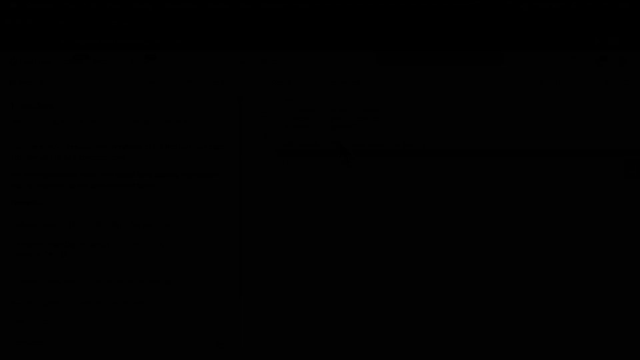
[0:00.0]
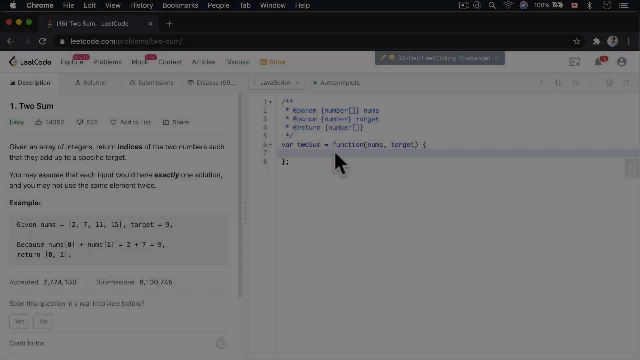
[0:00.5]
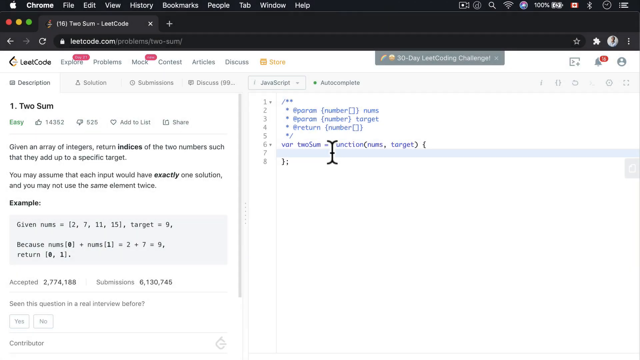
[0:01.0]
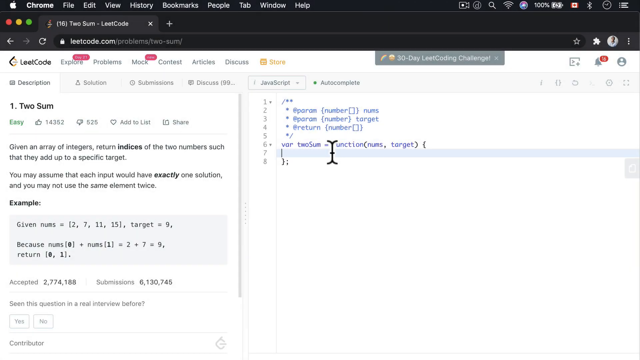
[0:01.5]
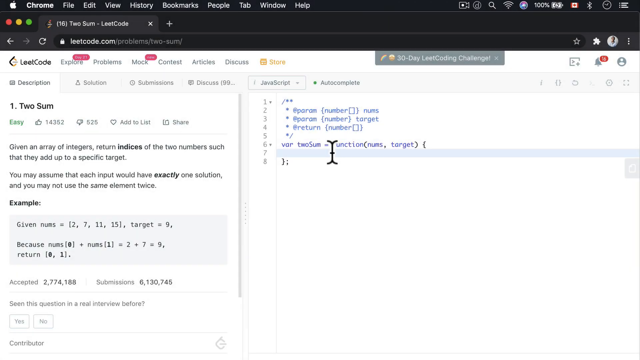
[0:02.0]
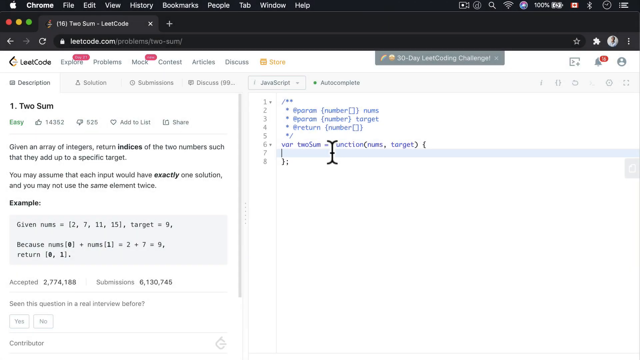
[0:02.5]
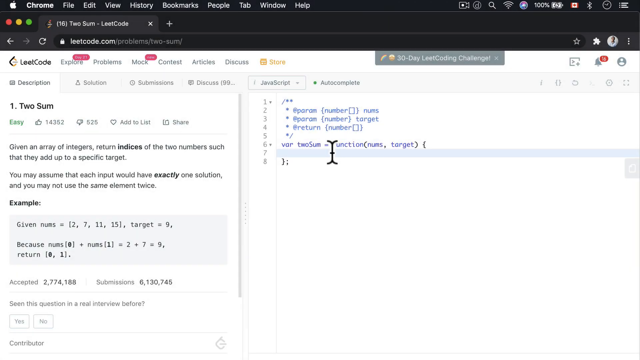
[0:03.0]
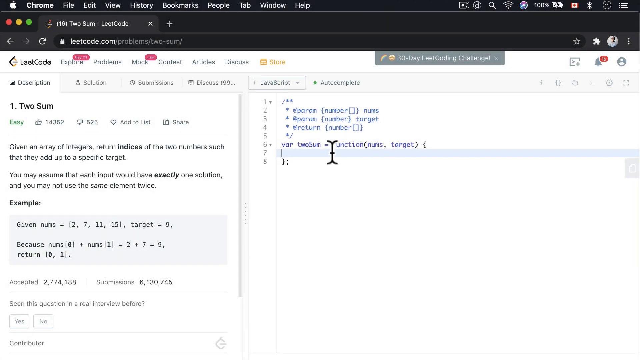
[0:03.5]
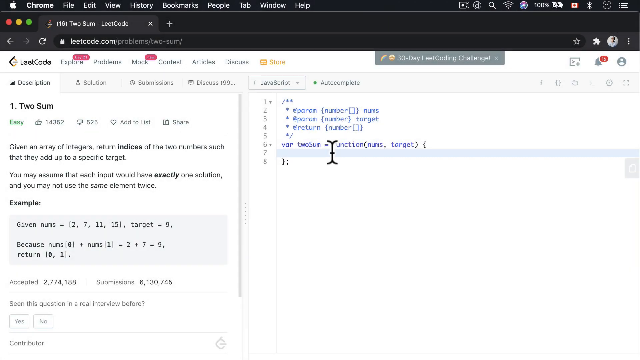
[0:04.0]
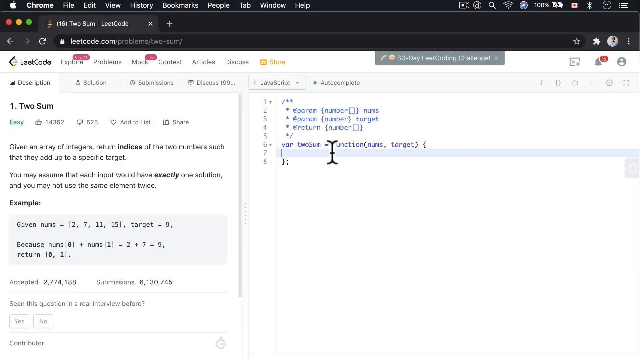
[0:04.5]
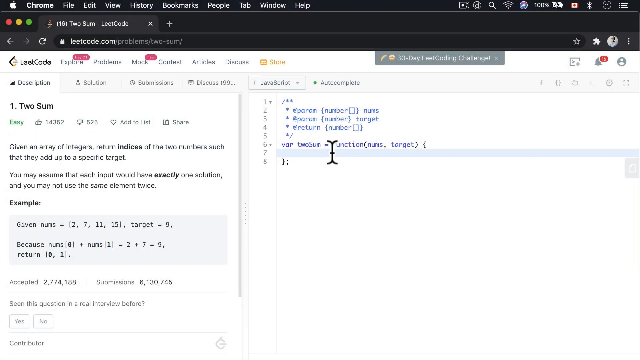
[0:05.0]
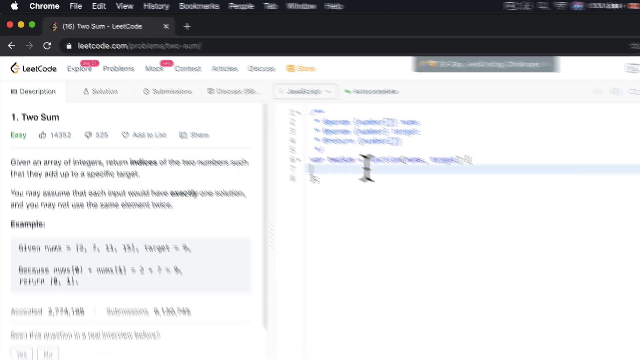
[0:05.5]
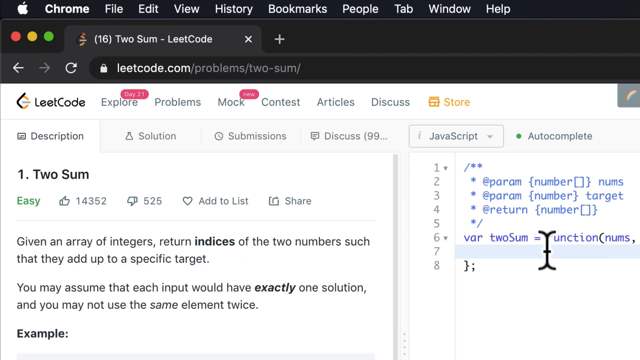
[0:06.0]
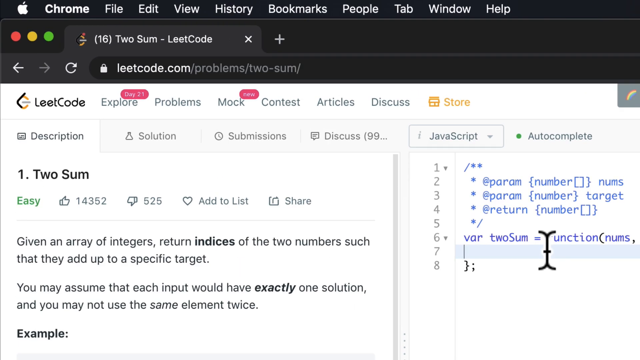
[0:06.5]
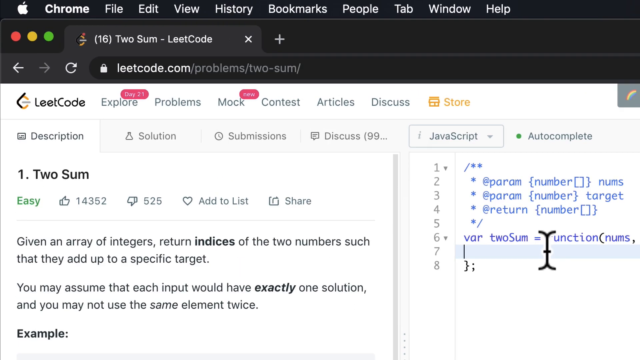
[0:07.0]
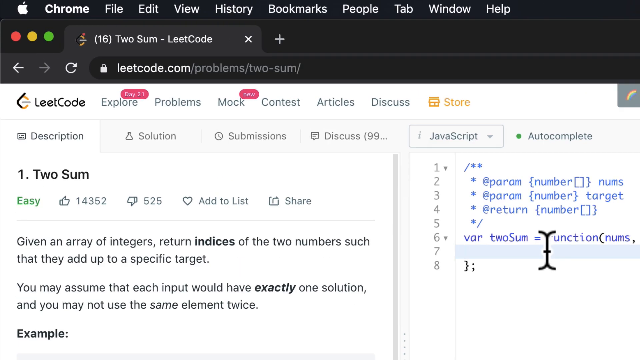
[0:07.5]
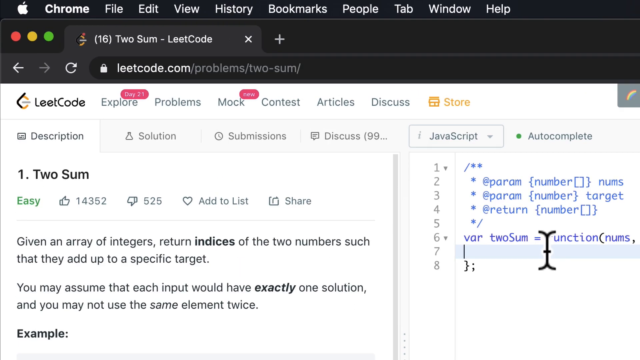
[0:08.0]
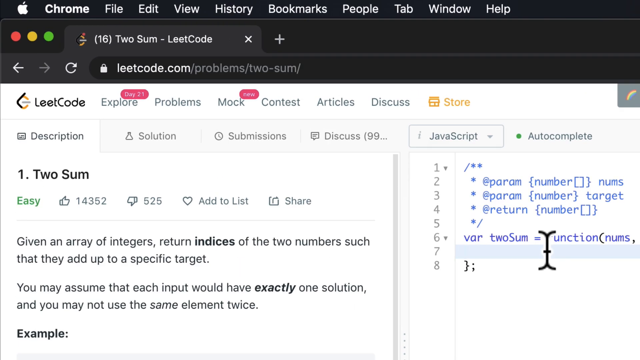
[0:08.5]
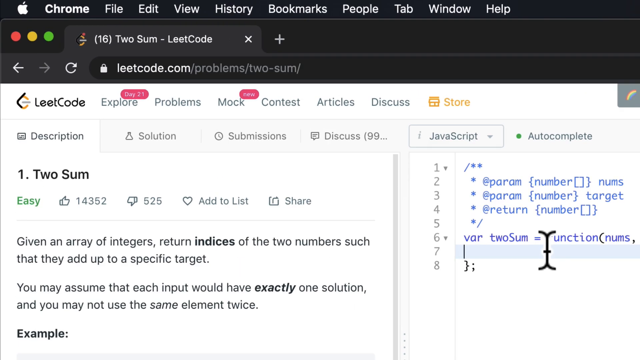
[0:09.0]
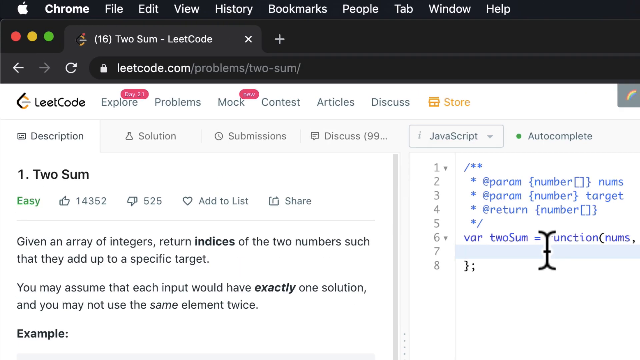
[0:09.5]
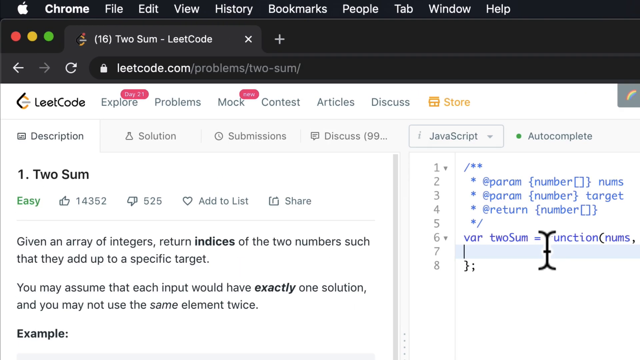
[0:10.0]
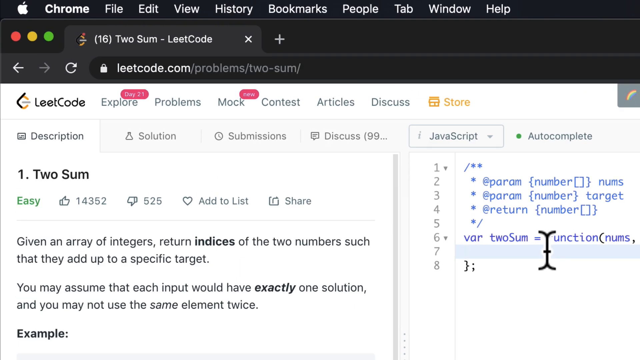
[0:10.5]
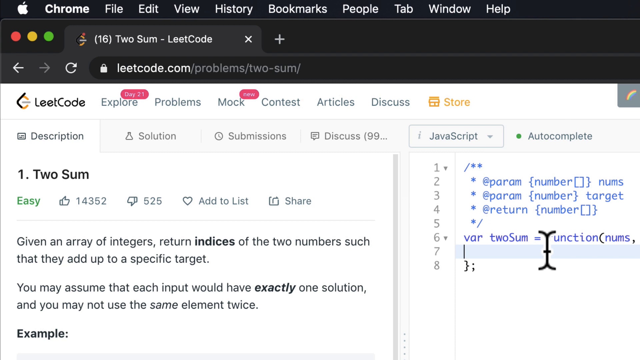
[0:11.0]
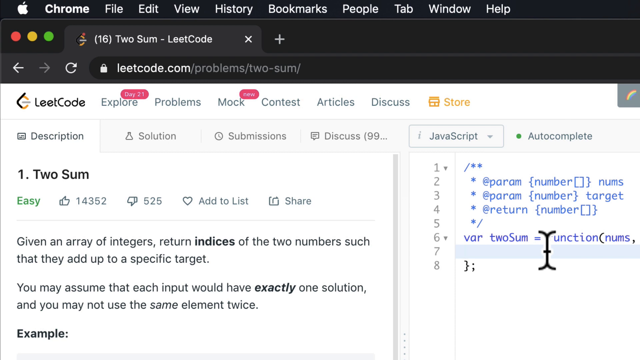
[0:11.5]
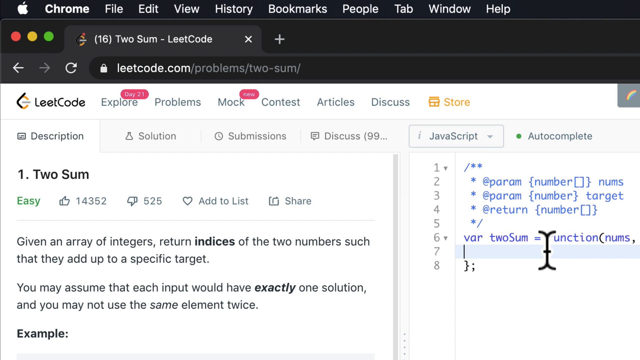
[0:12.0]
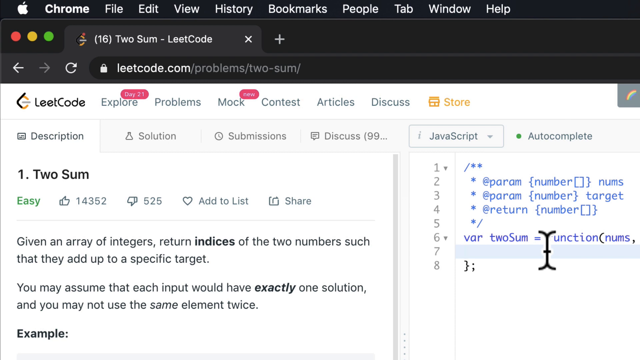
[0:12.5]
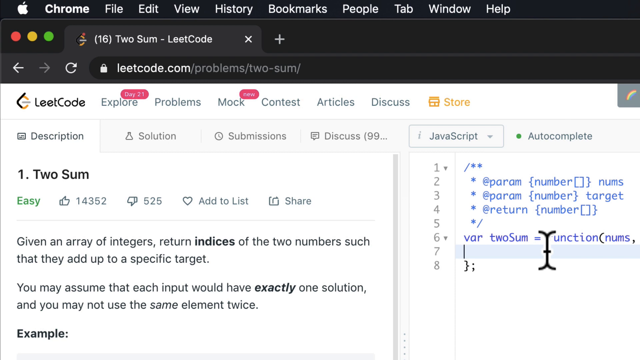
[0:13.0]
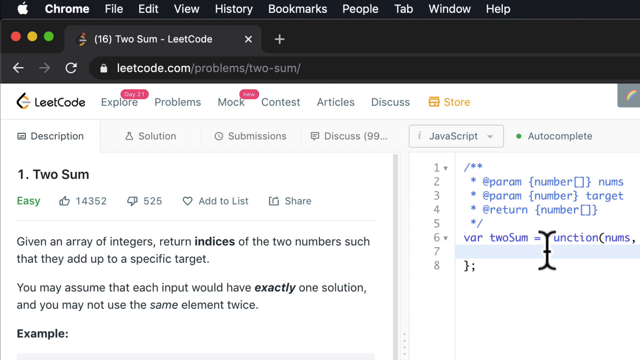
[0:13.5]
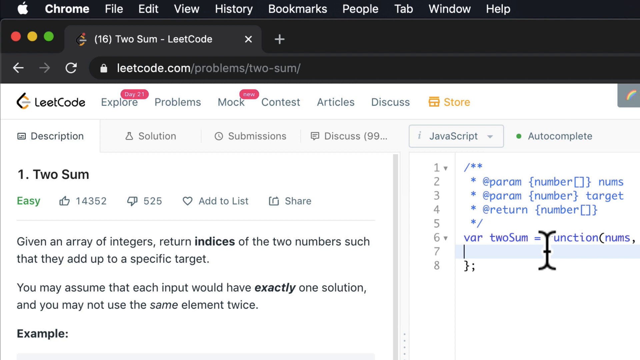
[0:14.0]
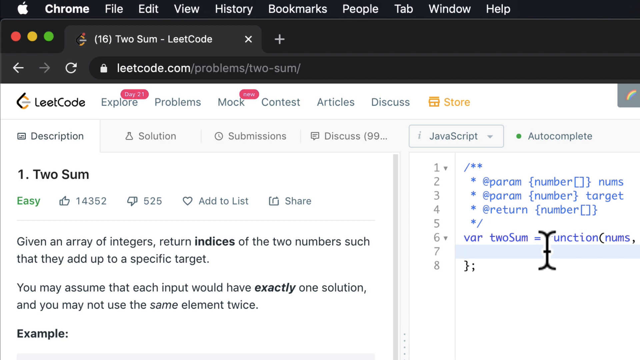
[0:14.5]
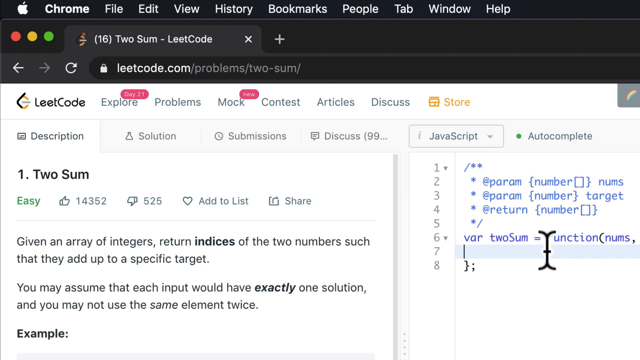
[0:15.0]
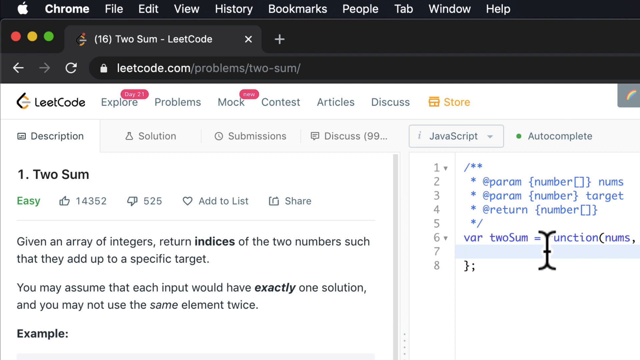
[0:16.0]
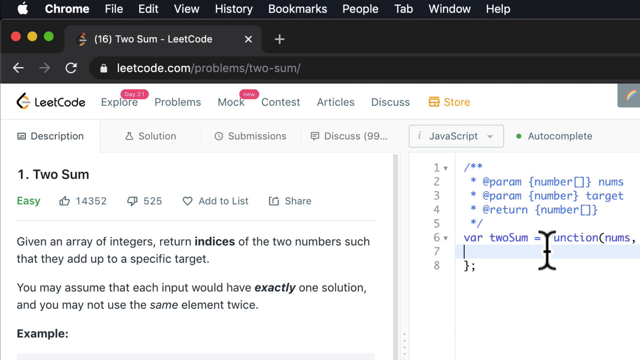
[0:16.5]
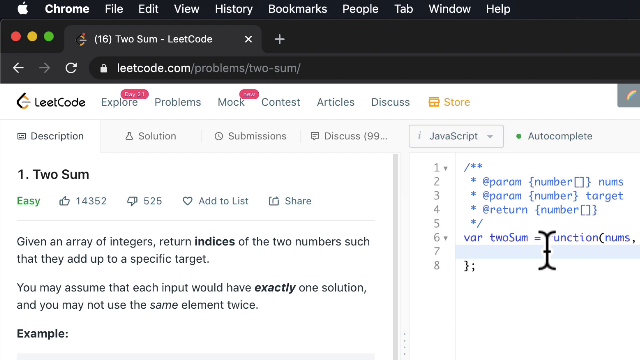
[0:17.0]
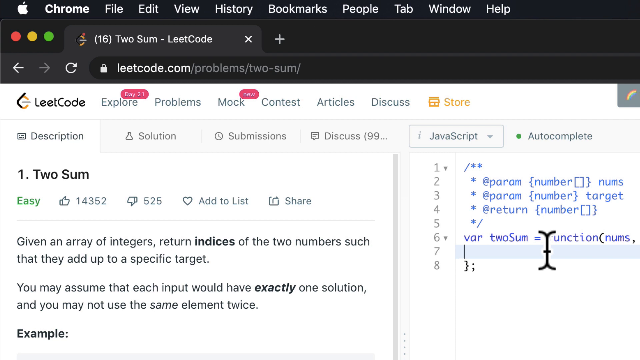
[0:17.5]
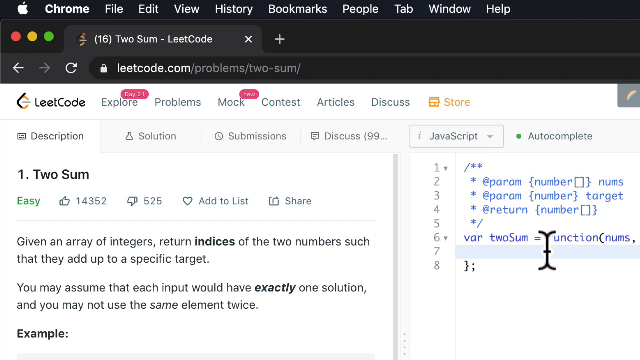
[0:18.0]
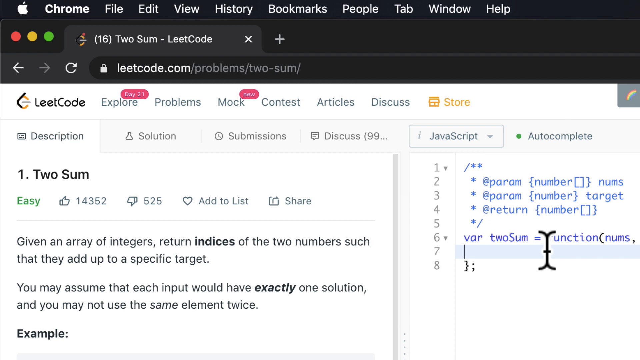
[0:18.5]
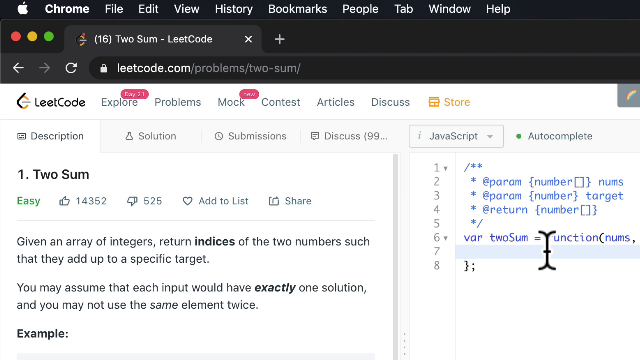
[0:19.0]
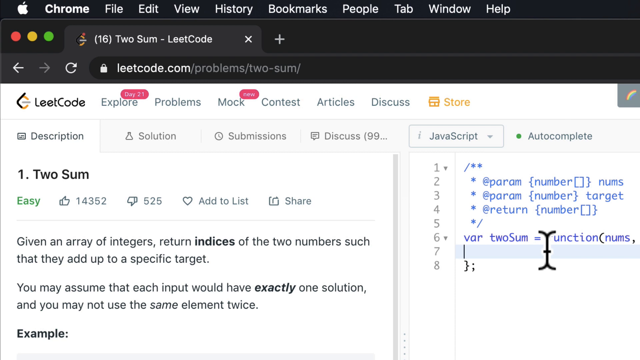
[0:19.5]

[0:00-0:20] Someone appears to be on a coding page, apparently called Leet Code. The view starts wide, showing the code. On the side there is text about something like summing. The view zooms in on the top left of the screen, where it says "two sum leet code". Along the top are categories reading "explore", "problems", "mock", "contest", "articles", "discuss" and "store". Underneath are items such as "description", "solution", "submissions", "discuss", "javascript" and "autocomplete". The page explains what two sum is and marks it as "easy". The video keeps zooming in on code on the website, apparently showing how to code.